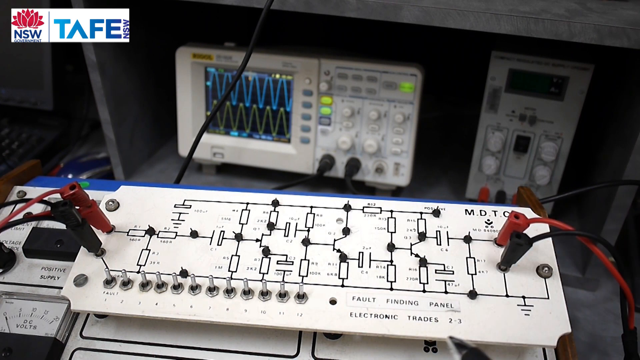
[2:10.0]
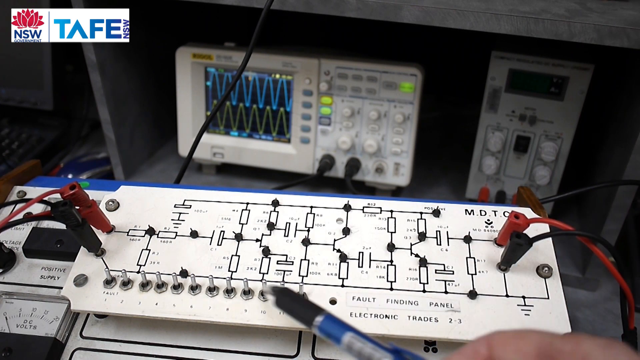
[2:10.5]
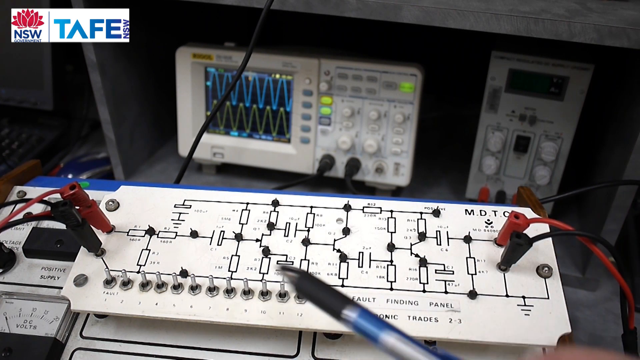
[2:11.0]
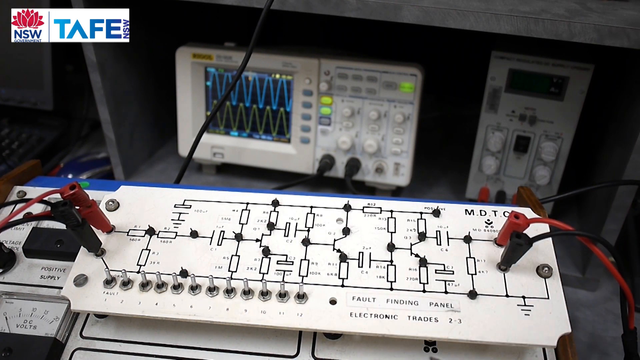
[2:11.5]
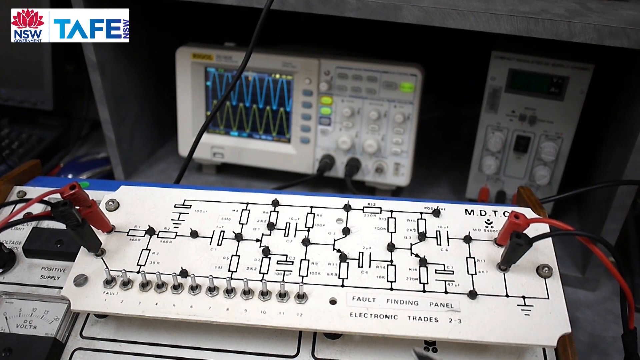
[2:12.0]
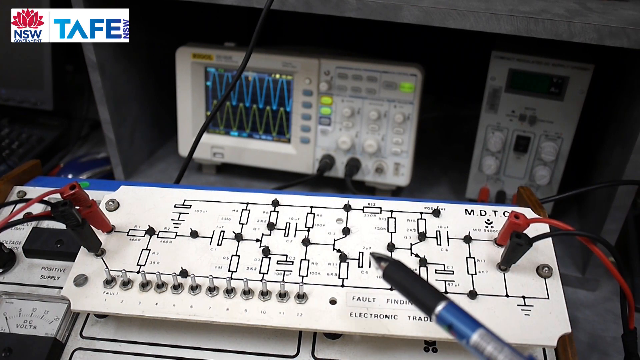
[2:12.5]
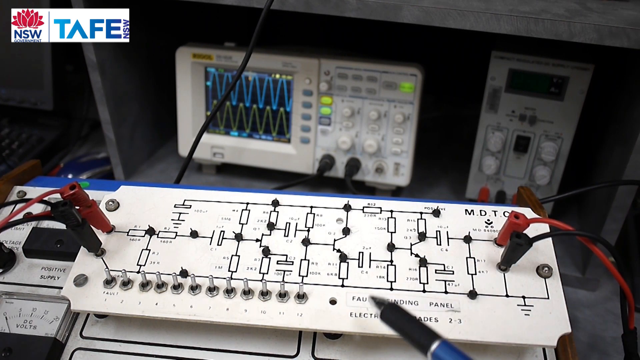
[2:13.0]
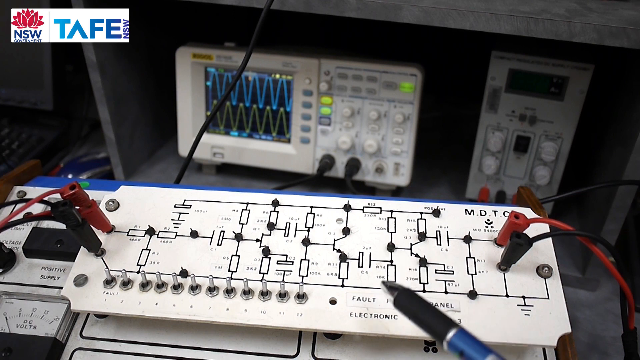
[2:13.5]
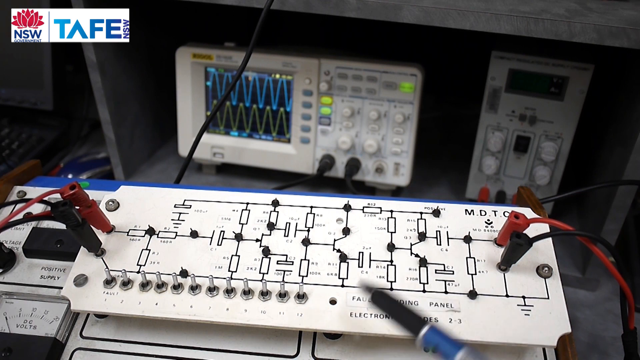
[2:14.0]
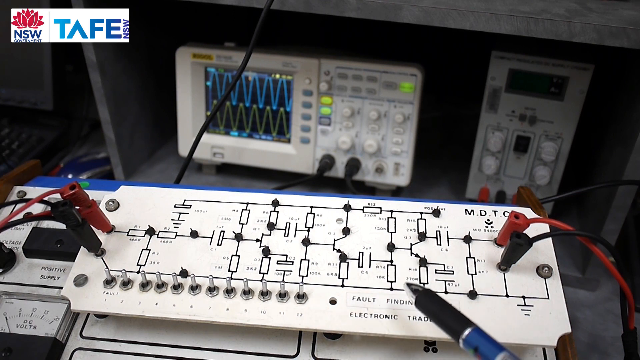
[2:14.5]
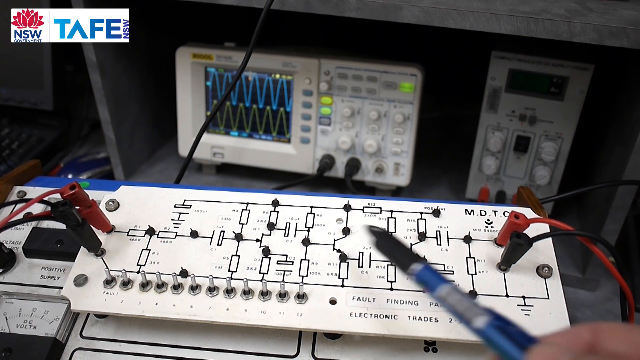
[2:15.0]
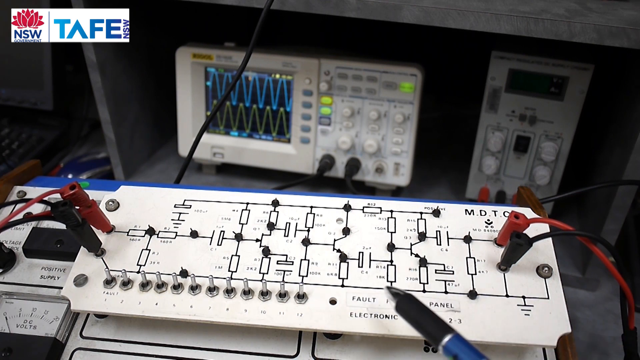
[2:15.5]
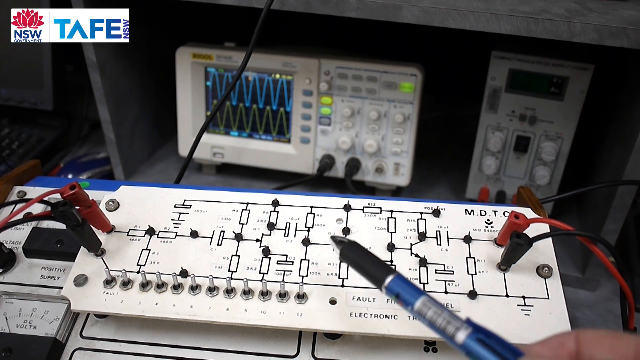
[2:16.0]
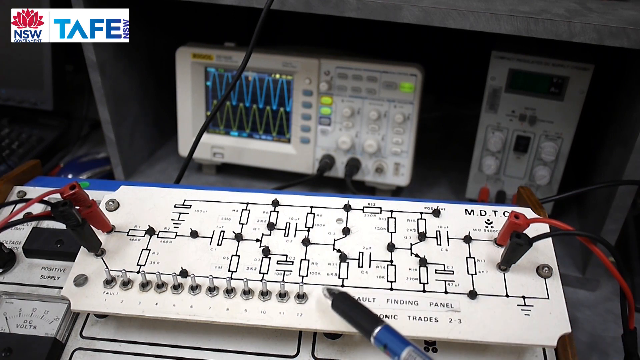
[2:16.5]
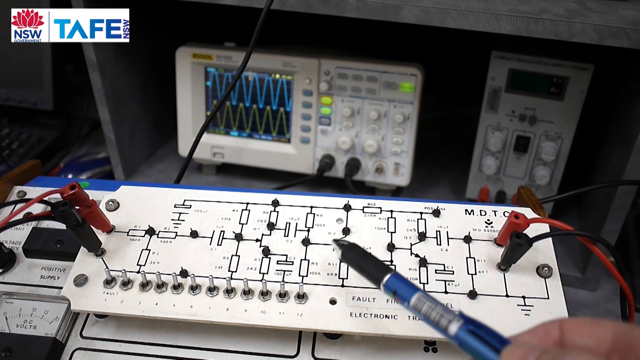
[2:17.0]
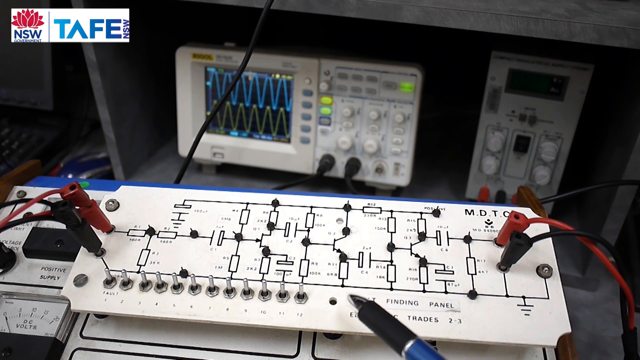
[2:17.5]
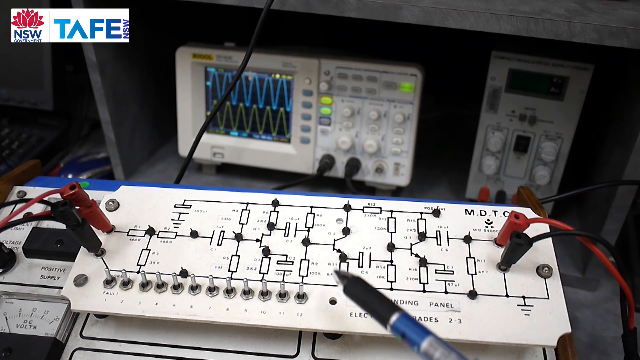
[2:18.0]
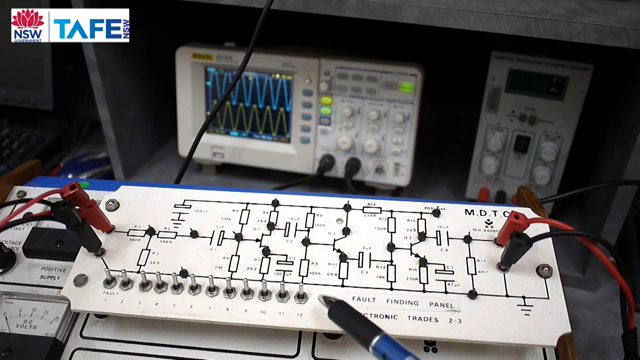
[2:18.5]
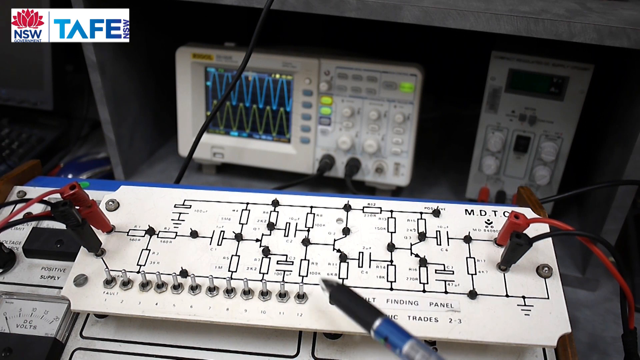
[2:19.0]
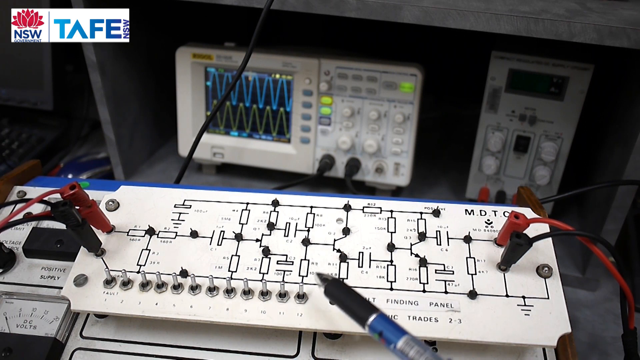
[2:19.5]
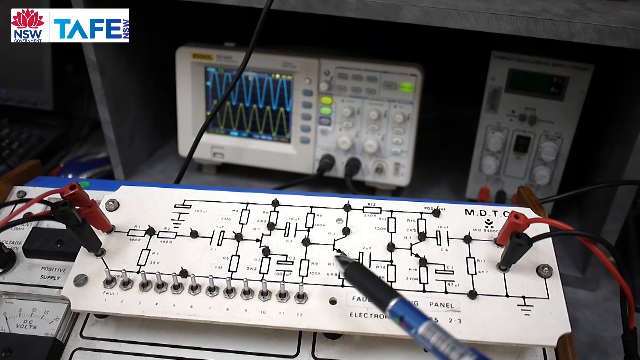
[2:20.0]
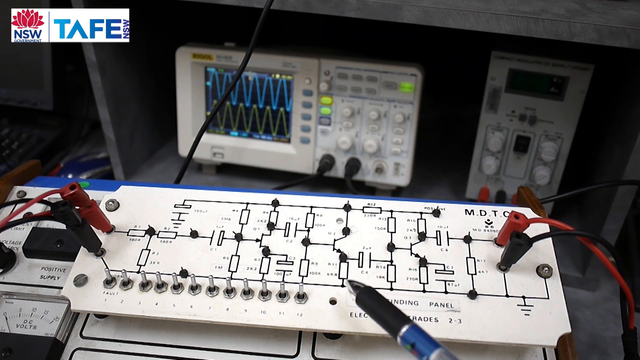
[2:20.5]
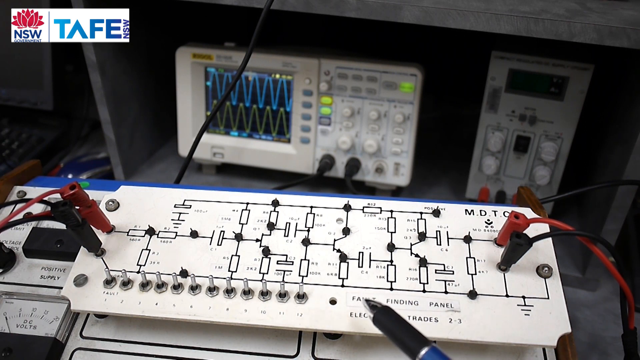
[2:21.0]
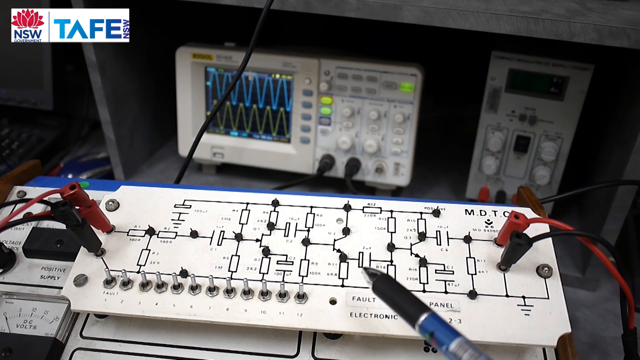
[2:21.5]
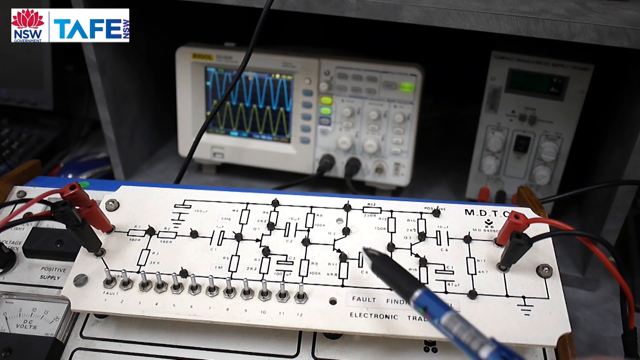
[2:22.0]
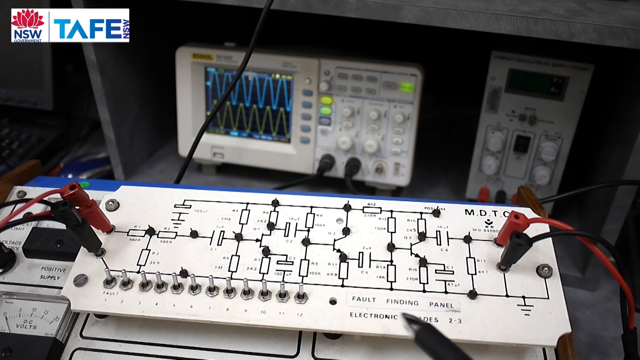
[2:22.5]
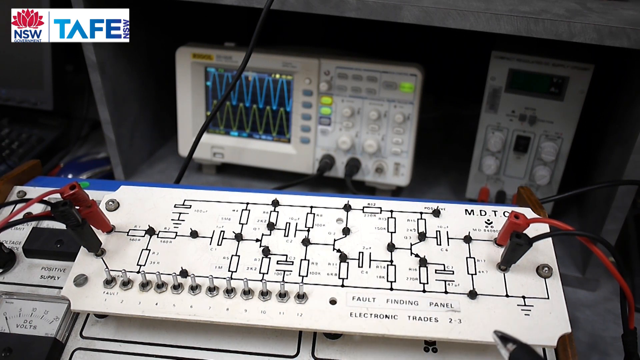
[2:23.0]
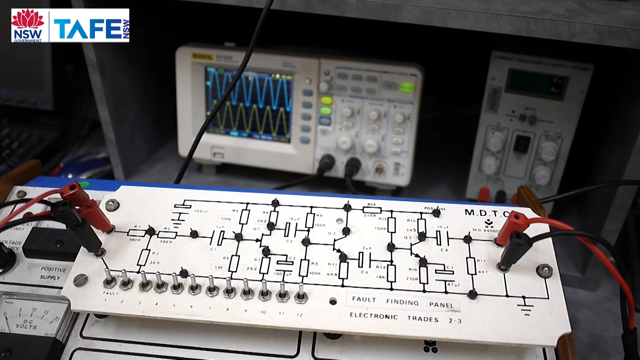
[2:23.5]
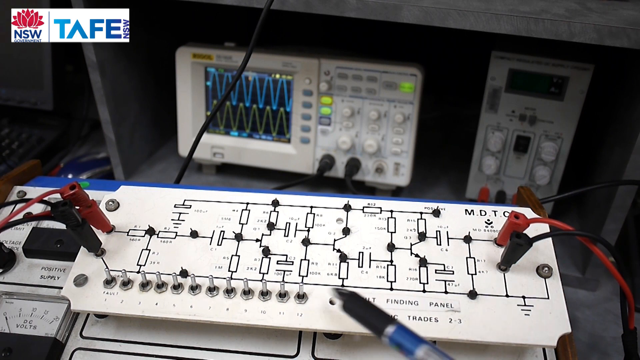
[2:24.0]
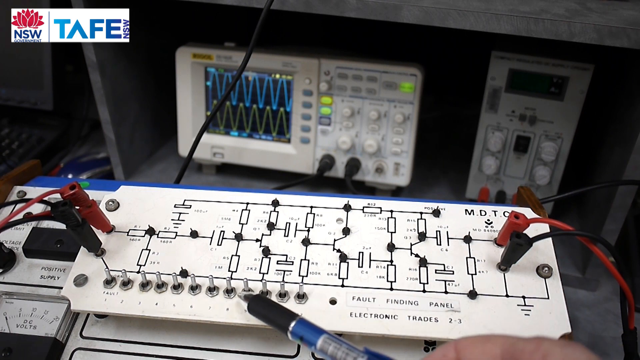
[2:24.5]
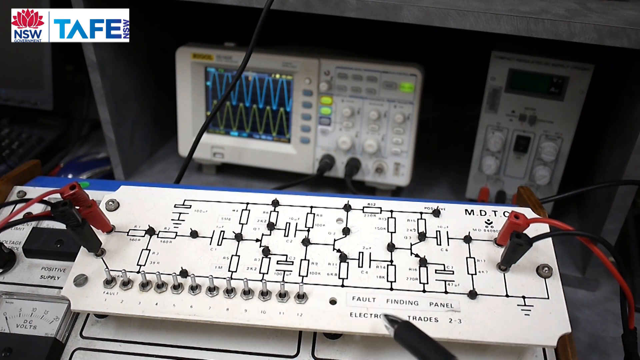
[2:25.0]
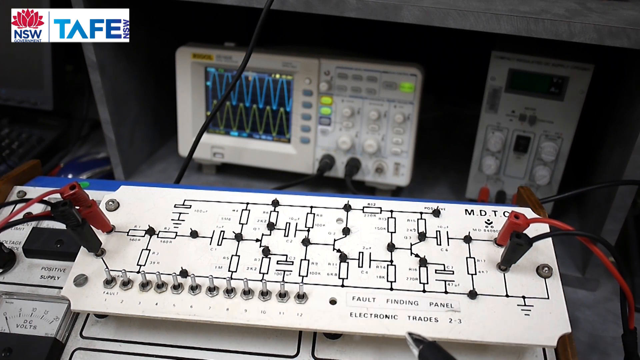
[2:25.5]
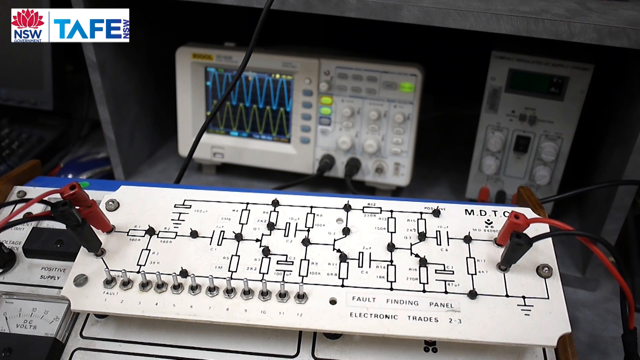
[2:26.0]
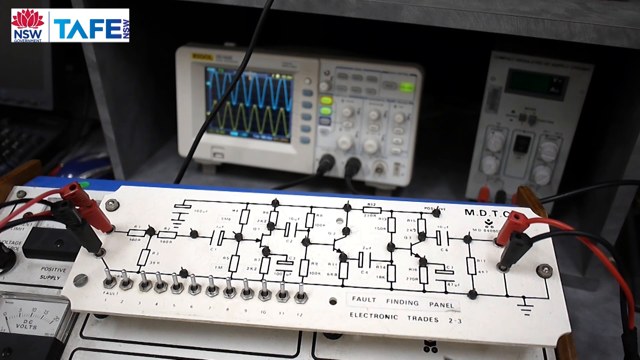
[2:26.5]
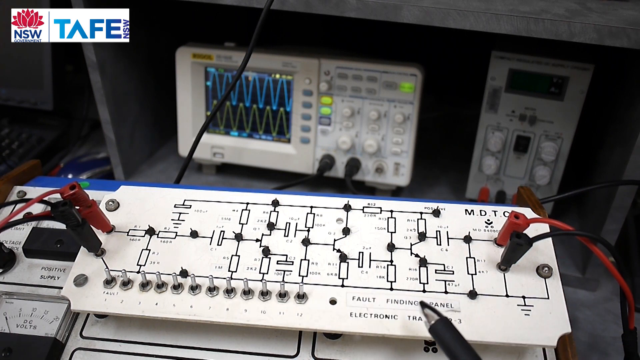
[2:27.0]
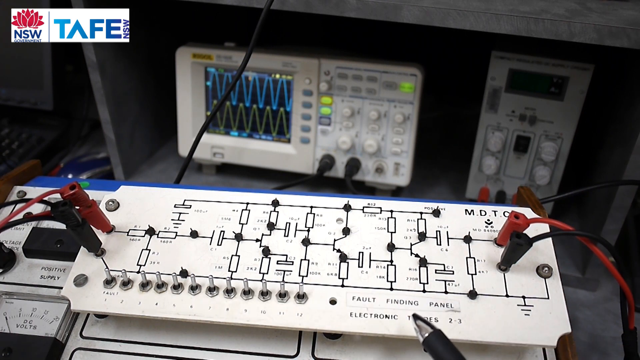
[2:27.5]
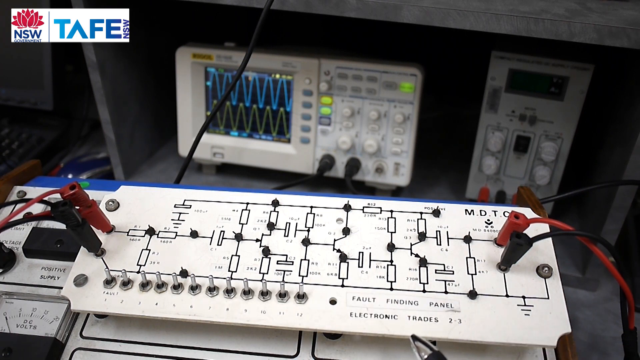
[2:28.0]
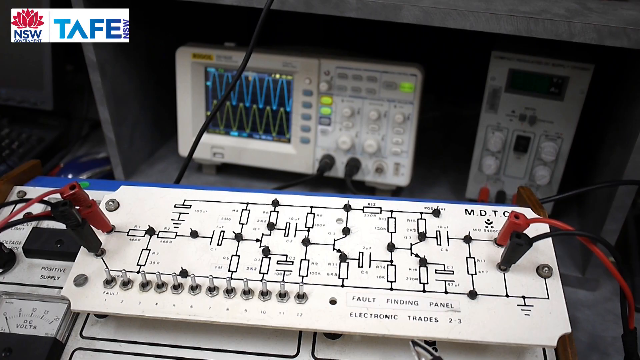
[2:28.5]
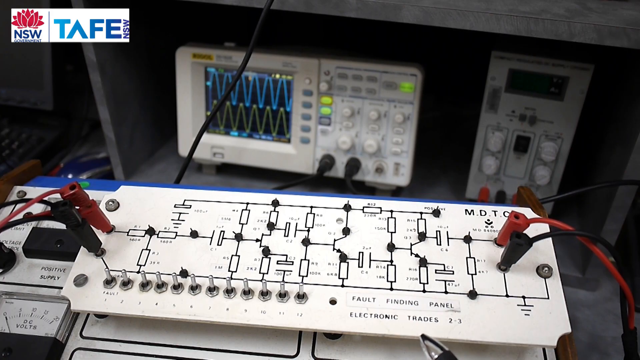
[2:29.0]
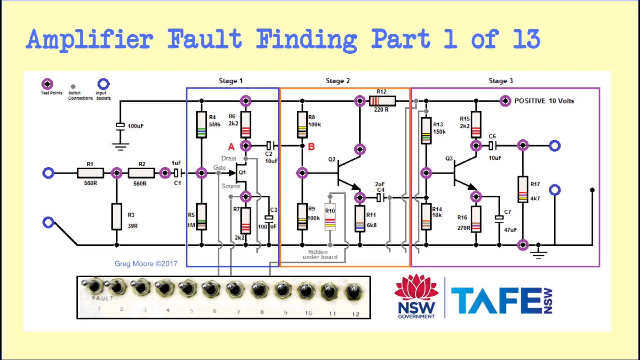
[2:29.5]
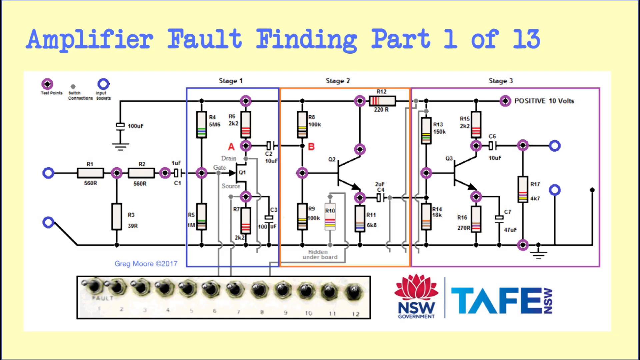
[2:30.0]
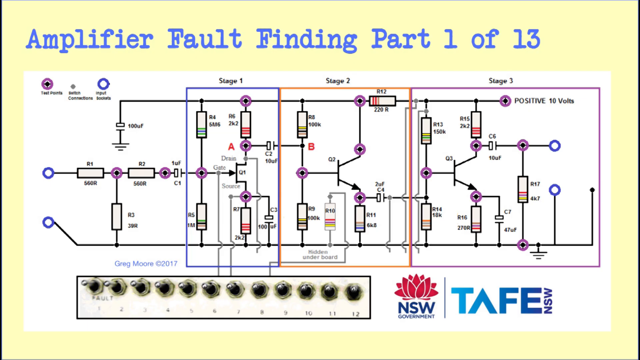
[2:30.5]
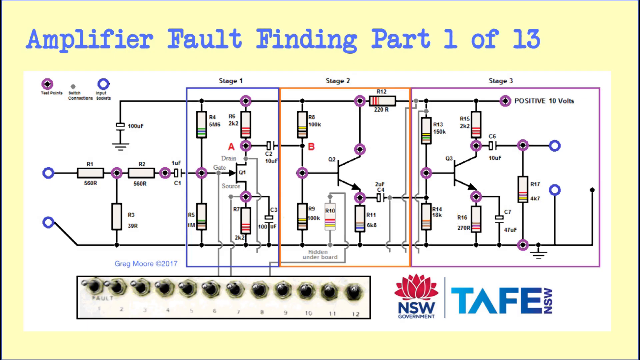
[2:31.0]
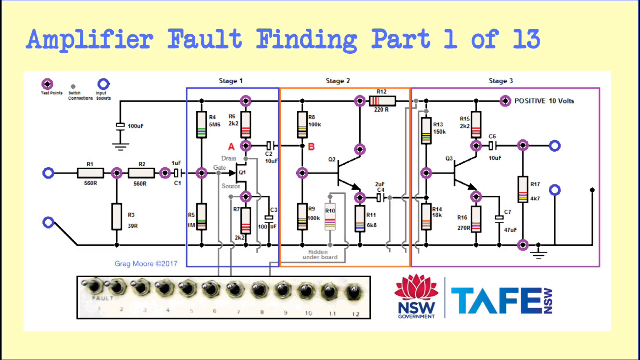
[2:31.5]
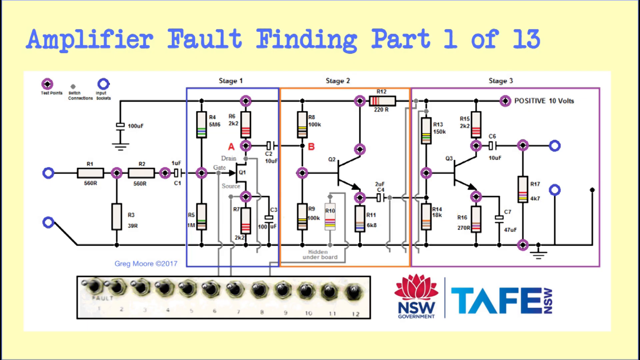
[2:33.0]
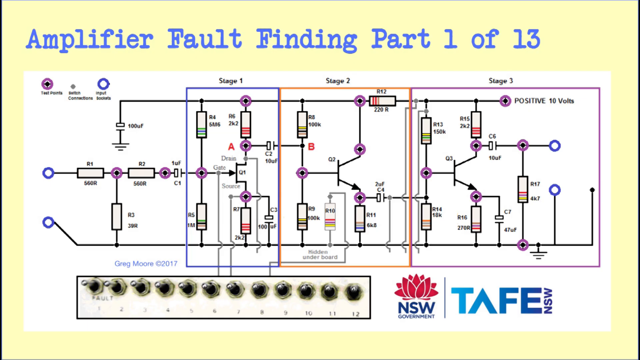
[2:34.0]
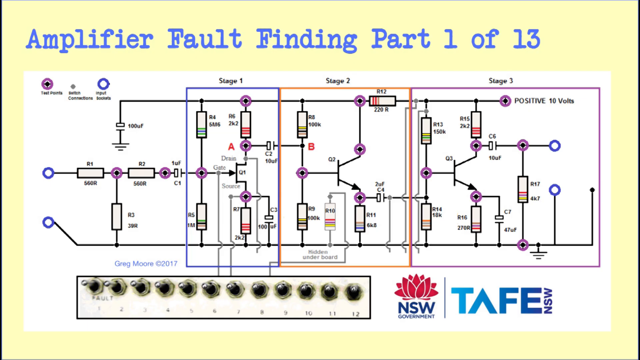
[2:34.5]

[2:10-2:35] The flat panel has lots of designs and inputs. Black and red wires are plugged into slots, and there are little red knobs that can be moved up and little switches that can be pushed up and down, on and off, each with a number underneath. Across the bottom of the panel it says "fault finding panel, electronic trades 2 to 3". Behind it is a rectangular box with wavy designs, and two black wires are plugged in at its bottom, below two very large white knobs. The person uses a pen to point. Finally, the screen changes back to the yellow background screen with the white box in the center showing a drawn map of an input panel or some sort of panel.